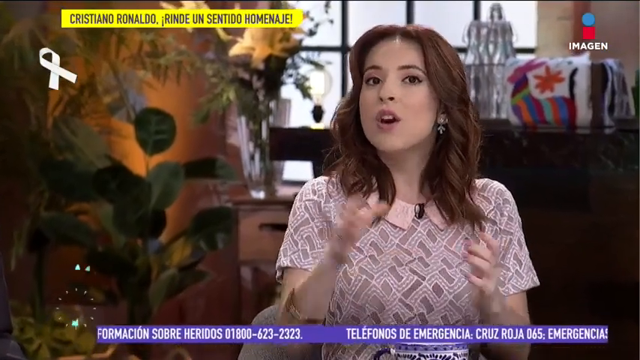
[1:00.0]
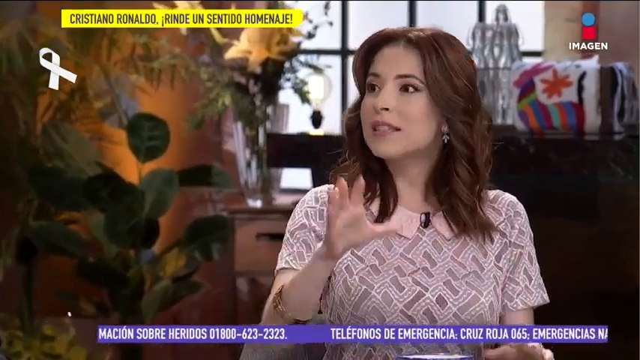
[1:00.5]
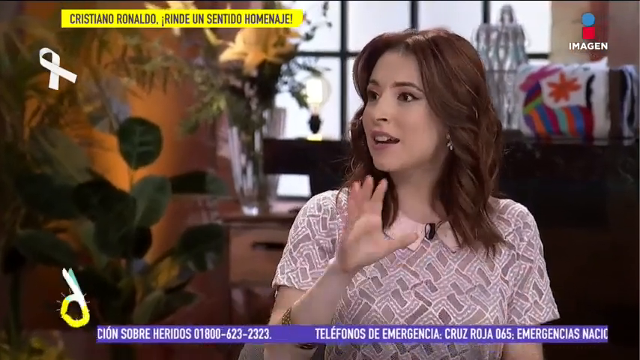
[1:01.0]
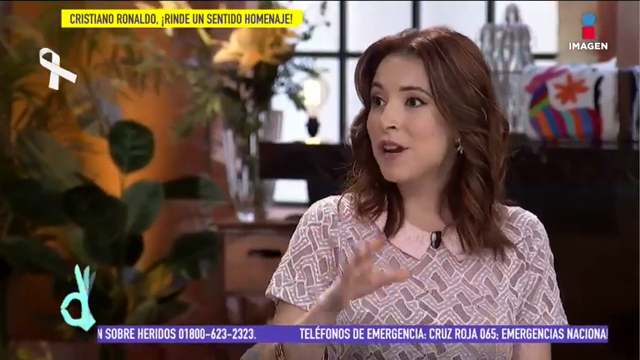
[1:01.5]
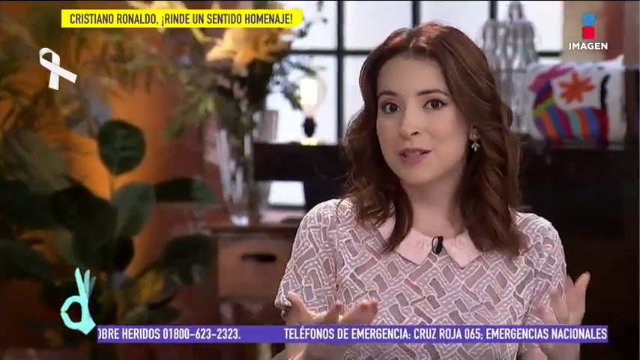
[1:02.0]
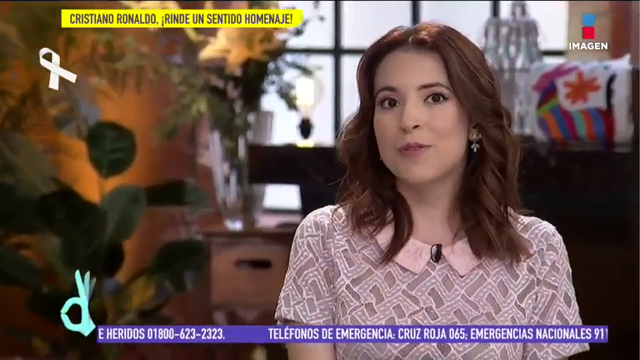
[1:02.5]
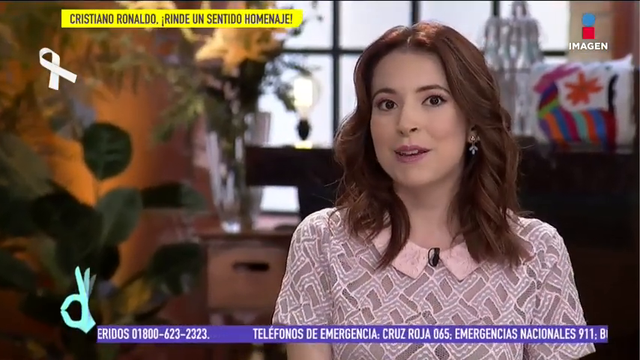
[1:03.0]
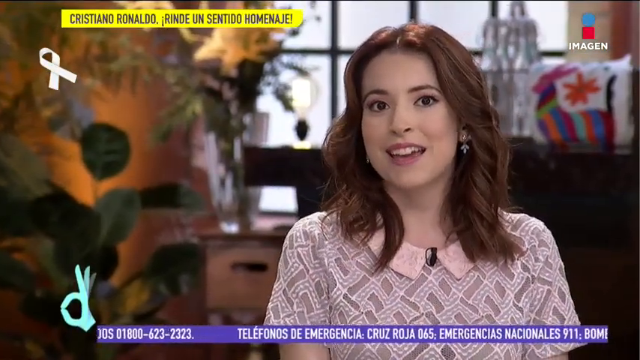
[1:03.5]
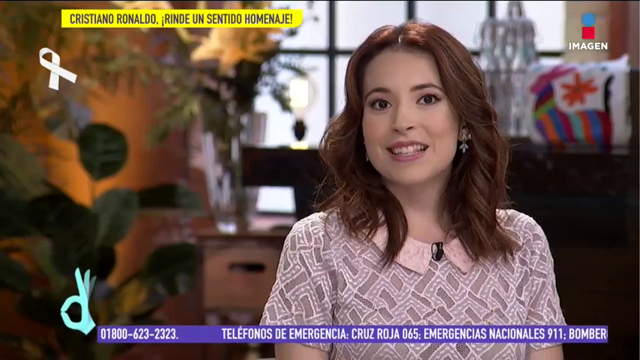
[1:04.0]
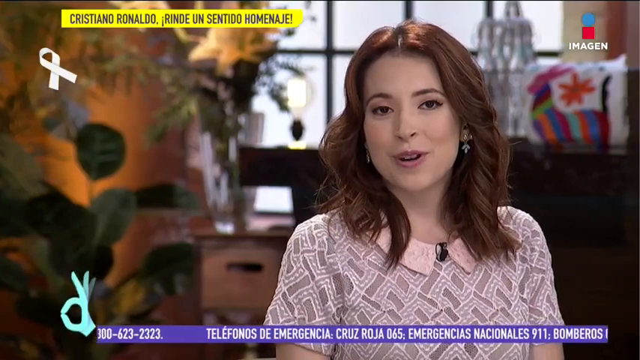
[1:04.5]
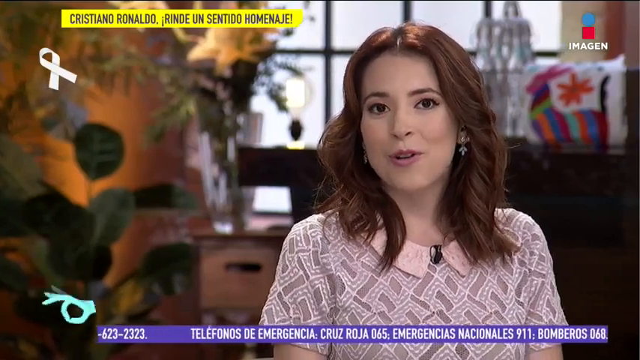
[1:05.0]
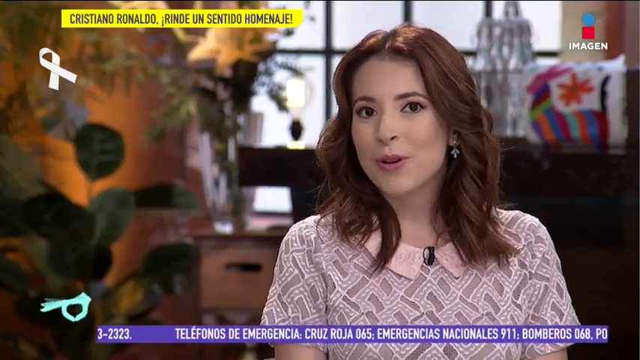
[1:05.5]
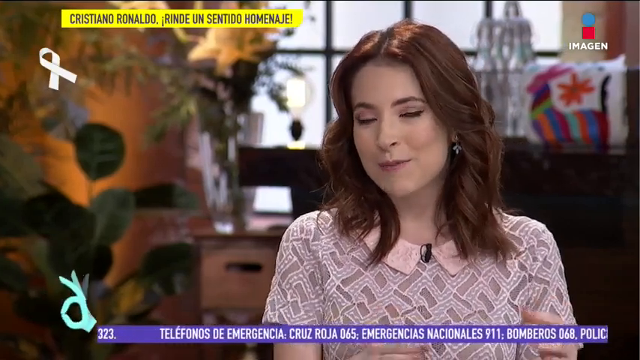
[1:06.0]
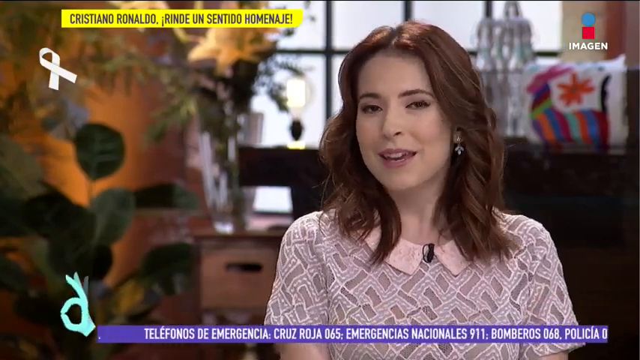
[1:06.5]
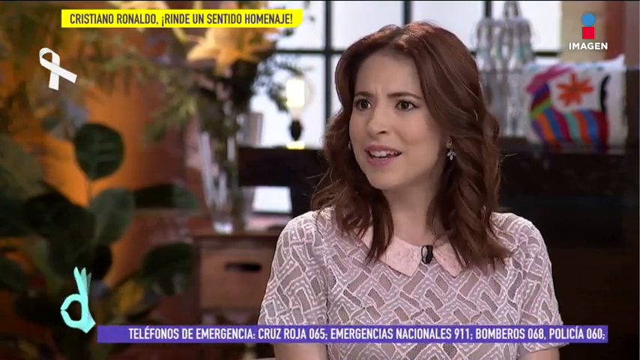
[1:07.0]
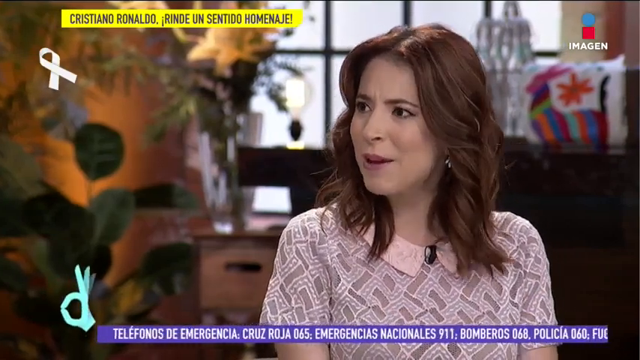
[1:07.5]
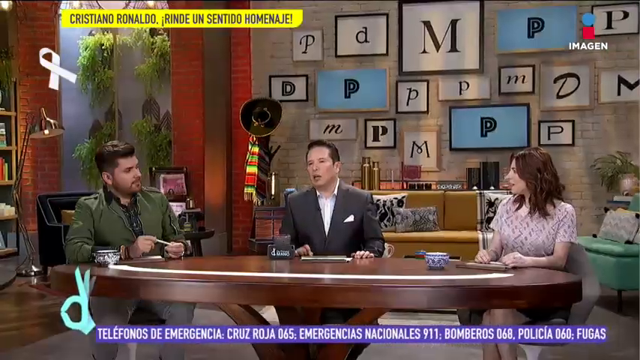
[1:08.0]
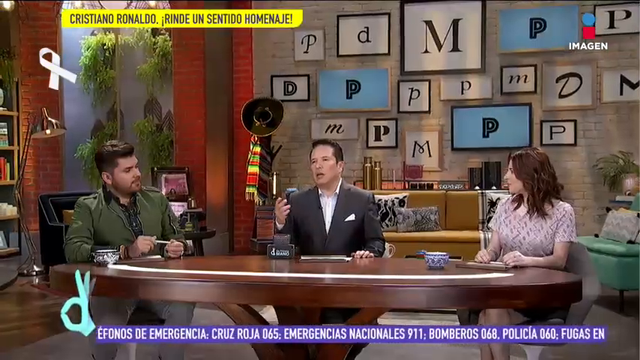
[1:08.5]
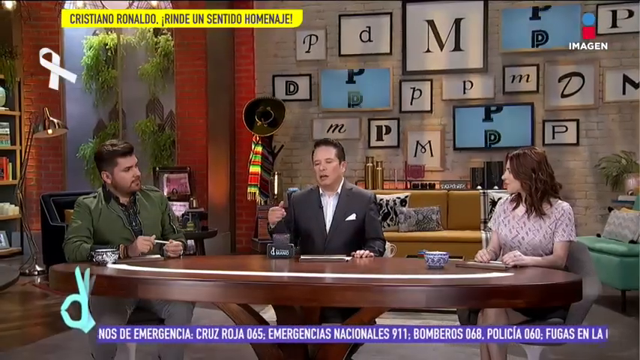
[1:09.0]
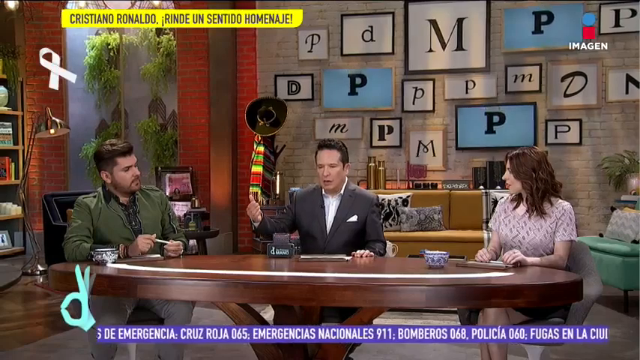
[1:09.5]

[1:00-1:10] The woman wears something pink with patterns on it; she has maroon-red hair and wears earrings. A peacock and a transparent flower pot are visible. She smiles as the camera moves closer to her face and then pans out. The shot then shows everyone in the studio before the man in the gray suit speaks, and the video moves into a solo shot.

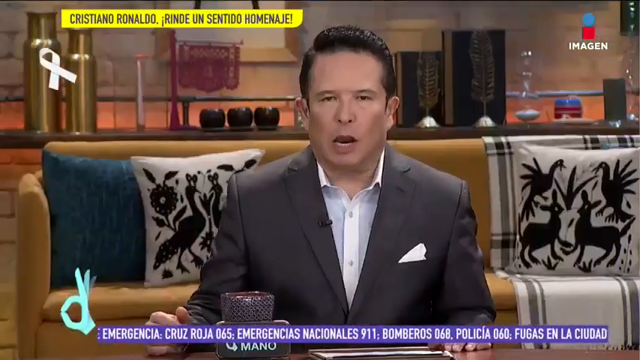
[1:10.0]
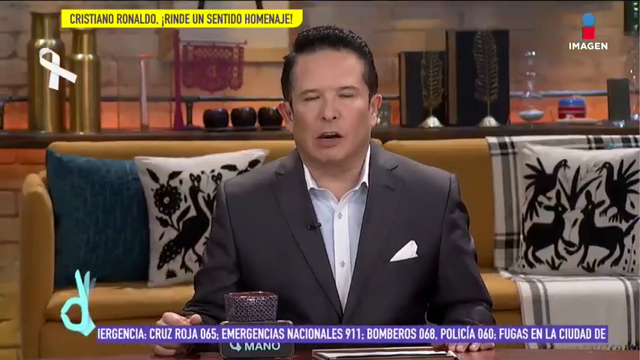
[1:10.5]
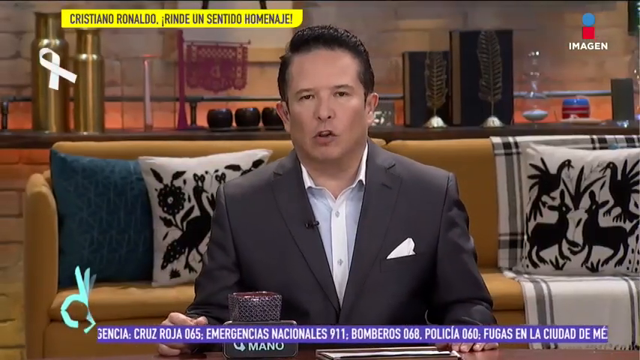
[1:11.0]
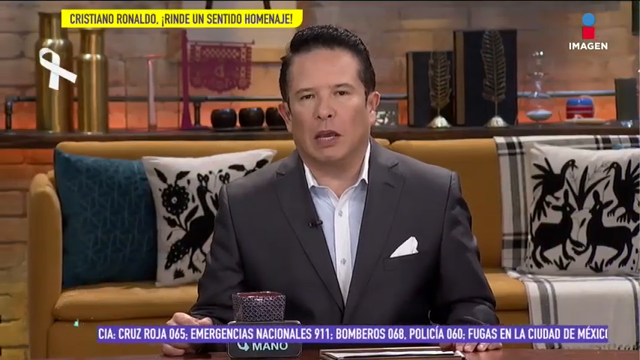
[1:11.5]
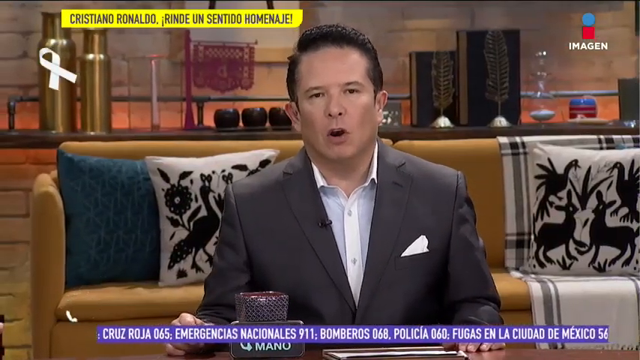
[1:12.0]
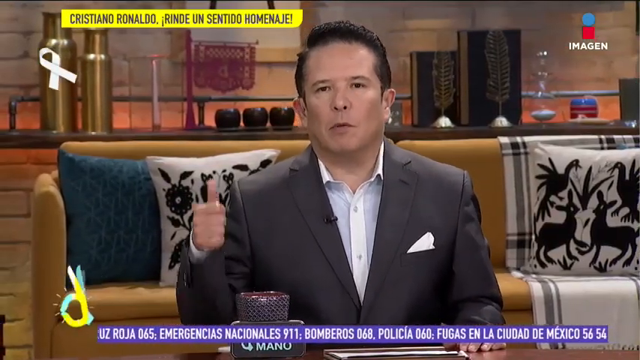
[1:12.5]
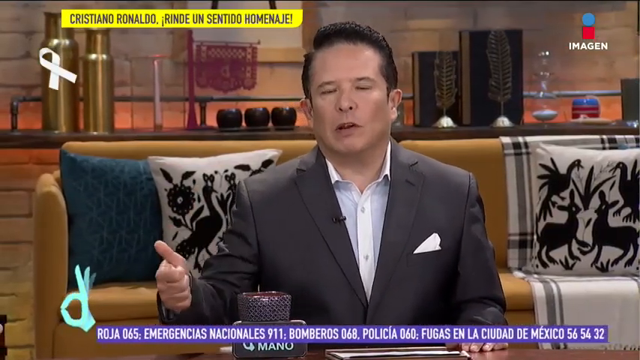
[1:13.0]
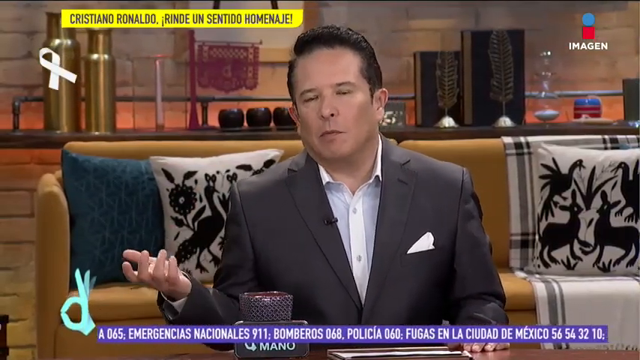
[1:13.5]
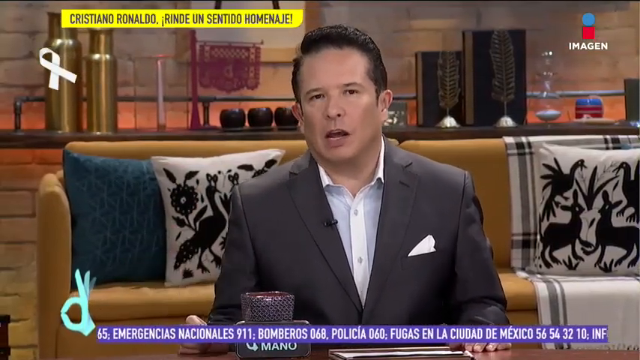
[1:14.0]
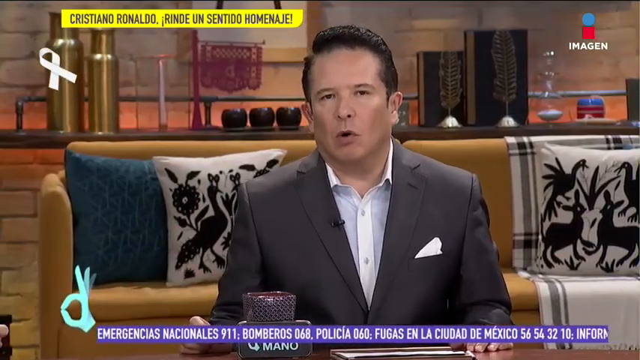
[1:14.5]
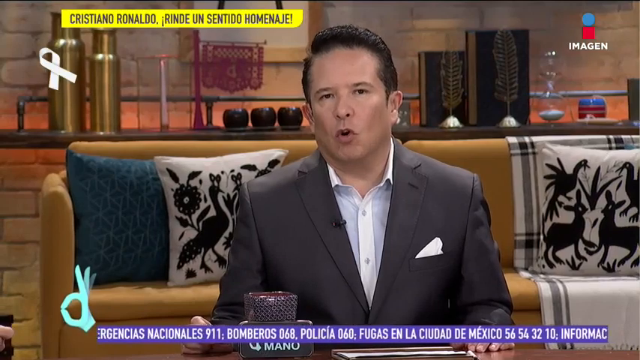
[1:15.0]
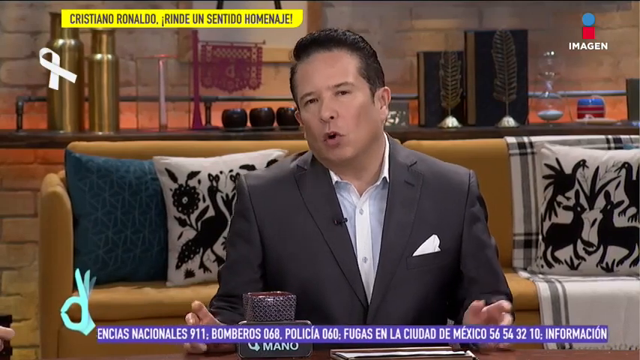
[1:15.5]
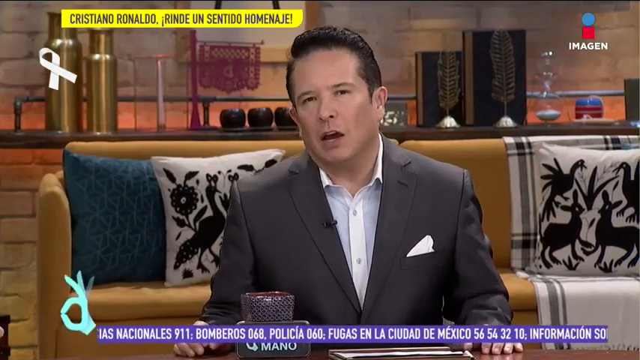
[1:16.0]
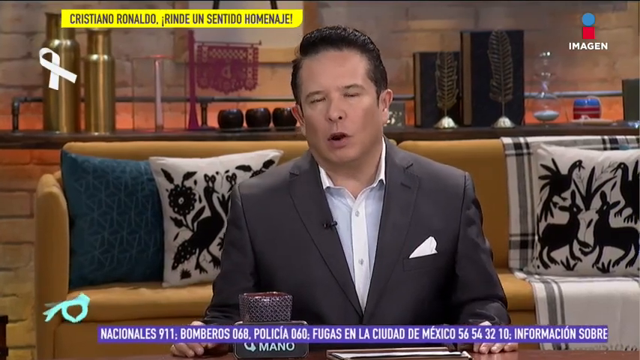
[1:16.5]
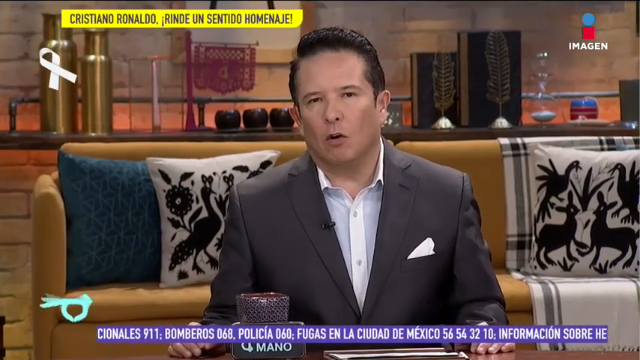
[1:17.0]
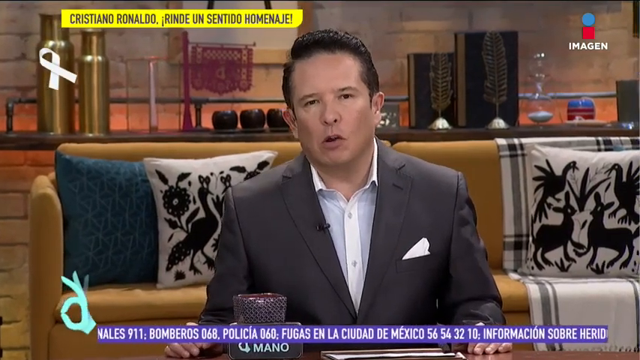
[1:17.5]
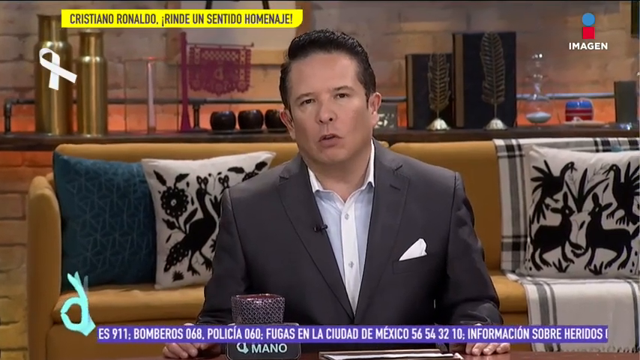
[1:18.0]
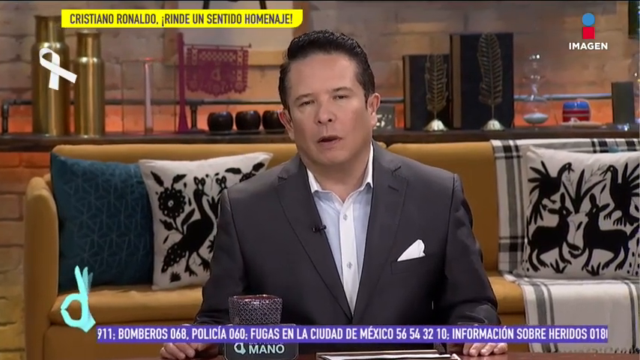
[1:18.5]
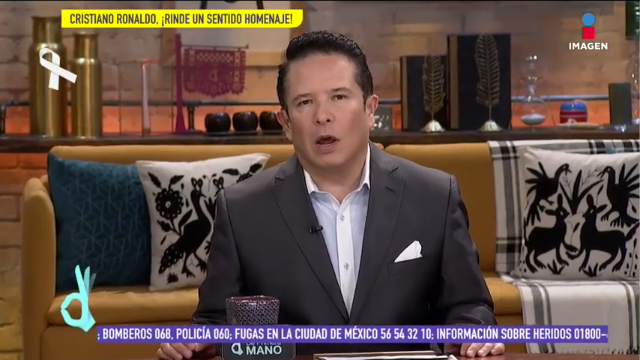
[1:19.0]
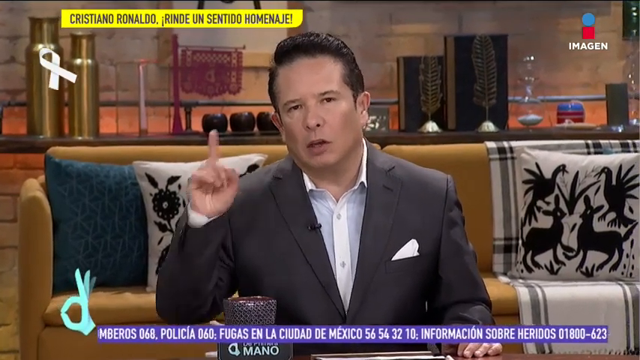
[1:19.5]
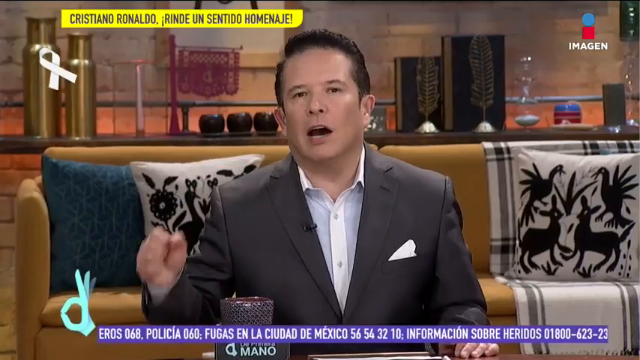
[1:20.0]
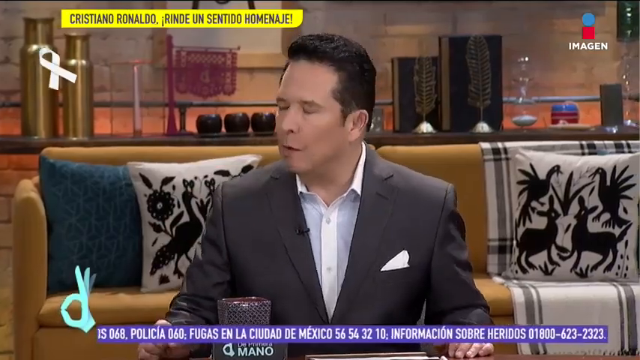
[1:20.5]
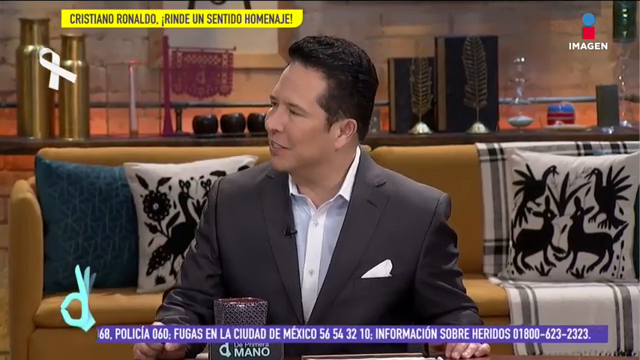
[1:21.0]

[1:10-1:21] In a solo shot, the man in the grey suit is shown with a couch behind him holding pillows with designs: on one side the designs look like ducks, and on the other side they look like birds and deer. The man speaks, putting his right hand out to make a gesture, then raising both hands to gesture, then raising one hand and showing one finger while gesturing. He then looks toward a guest on his side, a man wearing a green jacket.